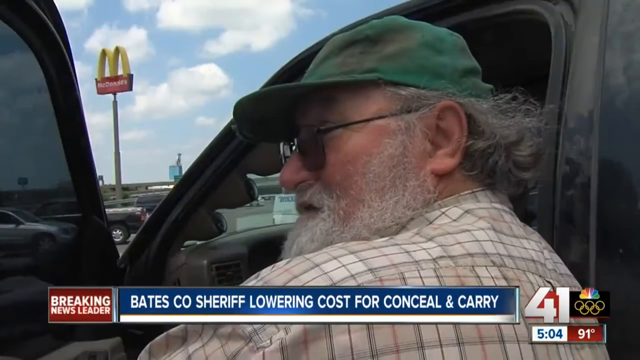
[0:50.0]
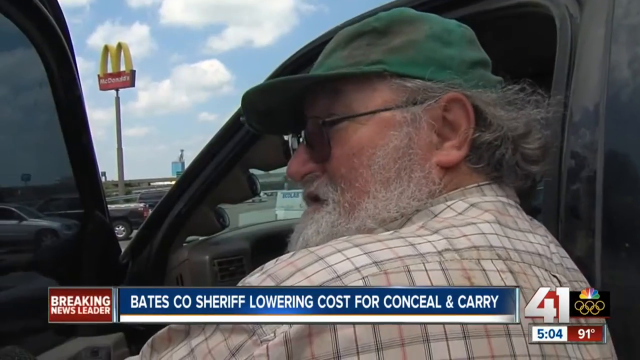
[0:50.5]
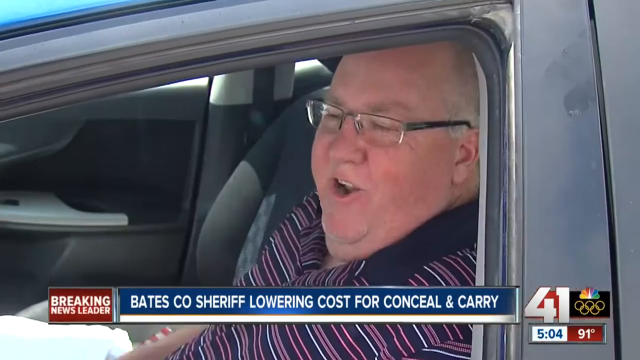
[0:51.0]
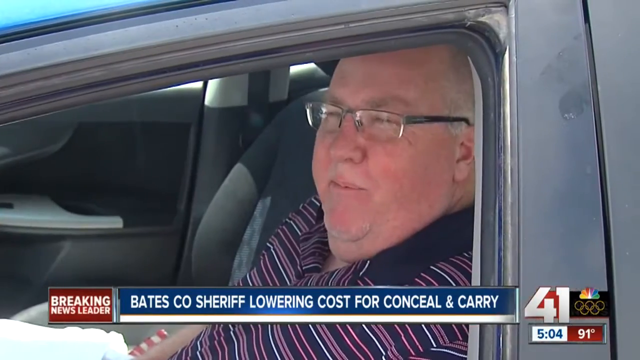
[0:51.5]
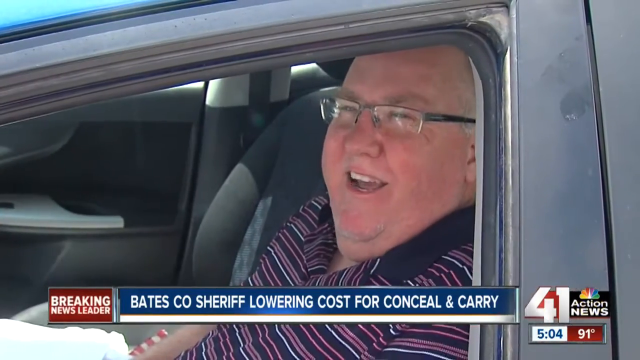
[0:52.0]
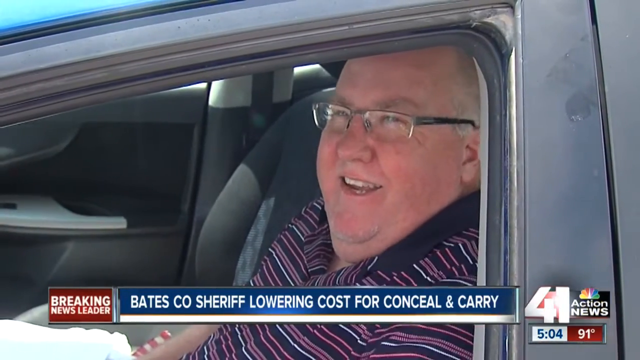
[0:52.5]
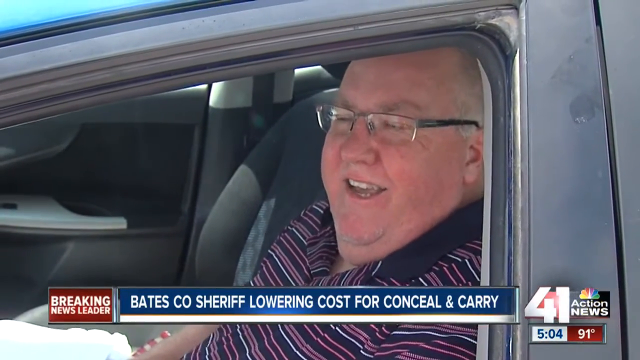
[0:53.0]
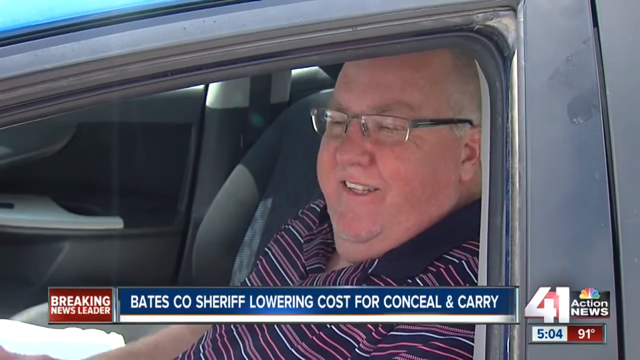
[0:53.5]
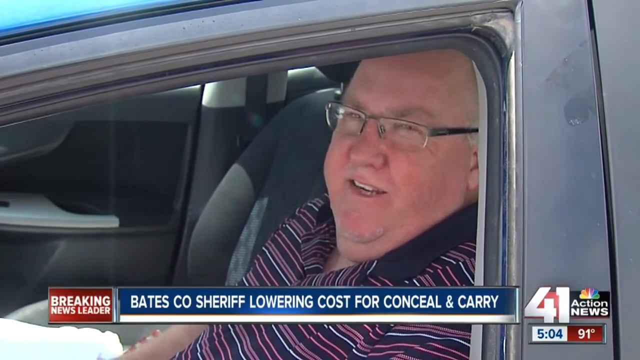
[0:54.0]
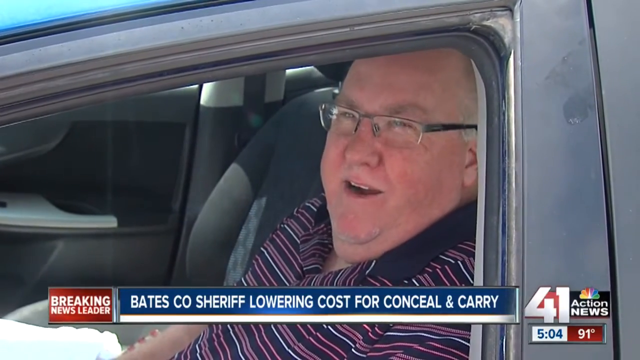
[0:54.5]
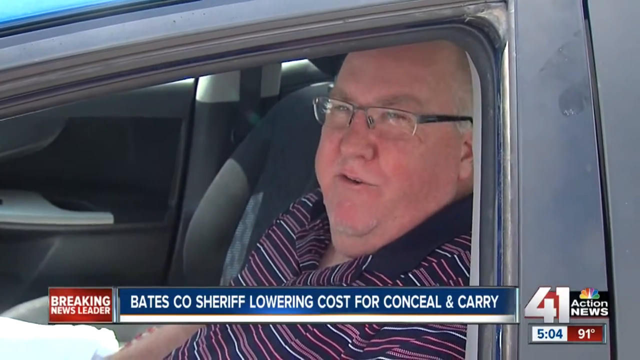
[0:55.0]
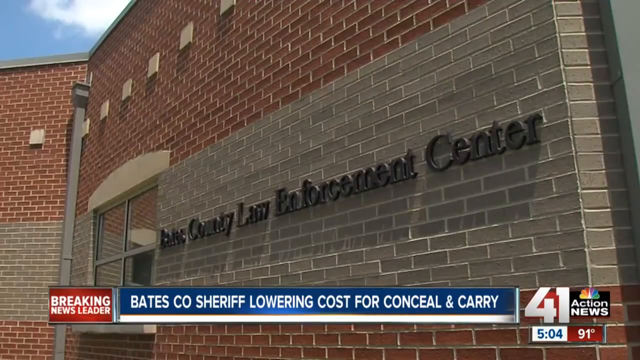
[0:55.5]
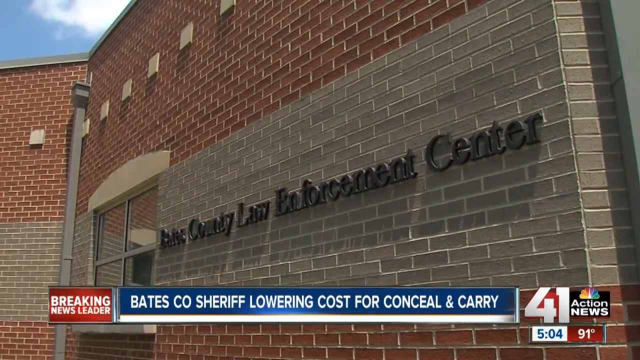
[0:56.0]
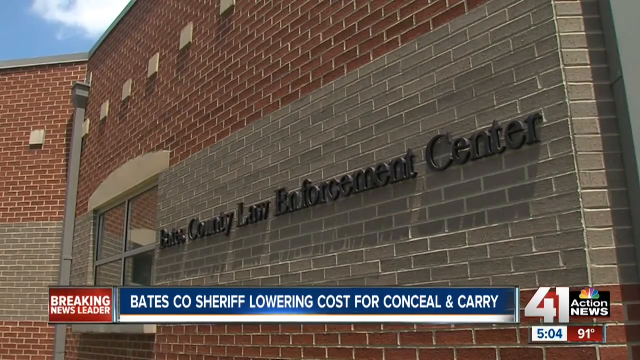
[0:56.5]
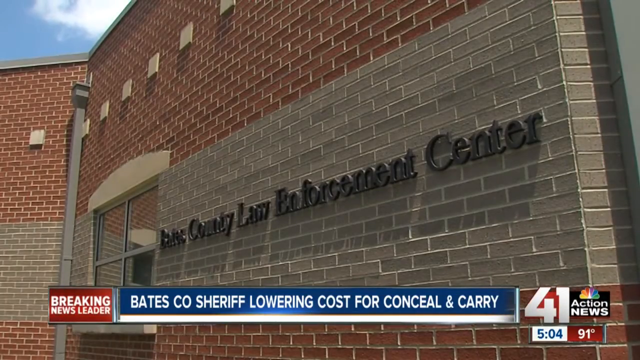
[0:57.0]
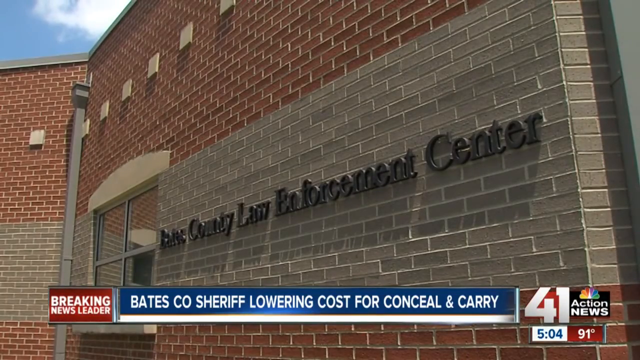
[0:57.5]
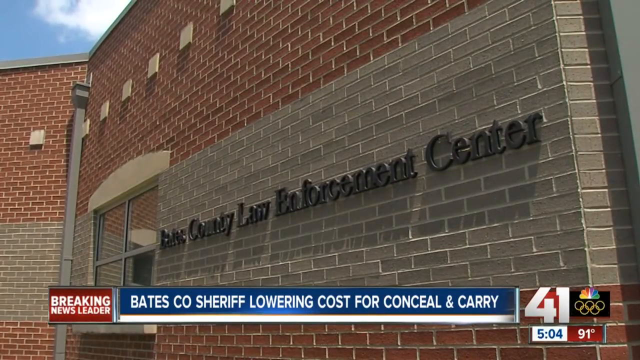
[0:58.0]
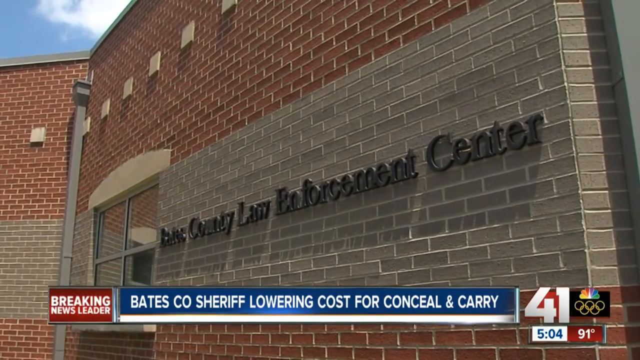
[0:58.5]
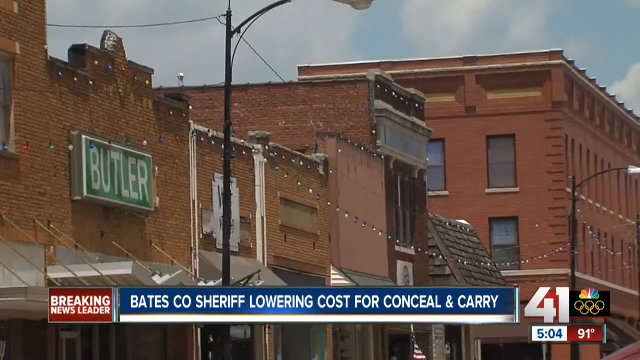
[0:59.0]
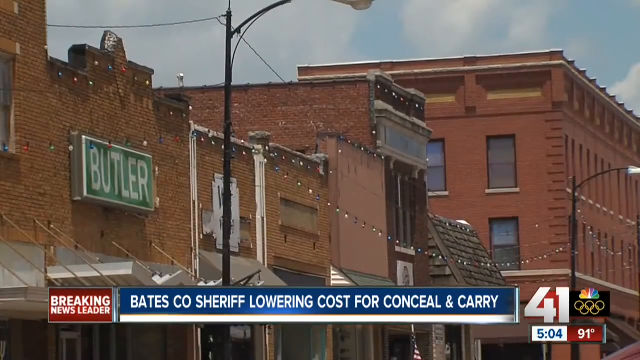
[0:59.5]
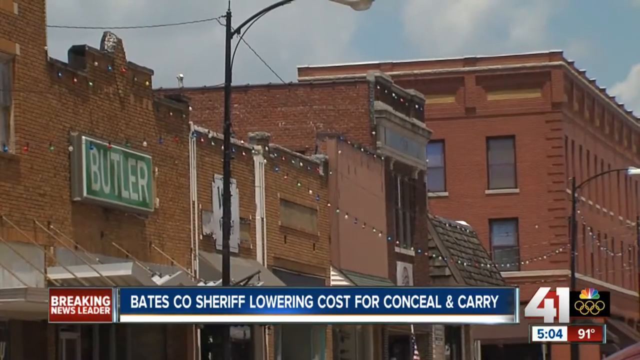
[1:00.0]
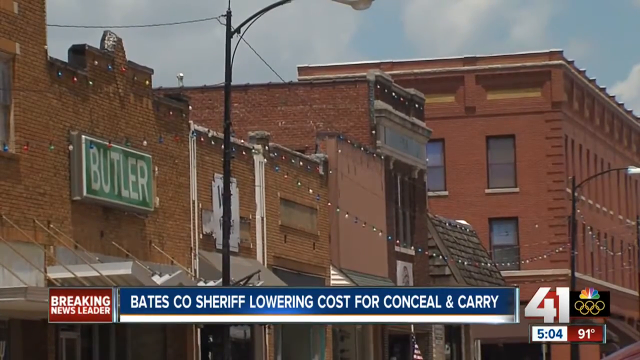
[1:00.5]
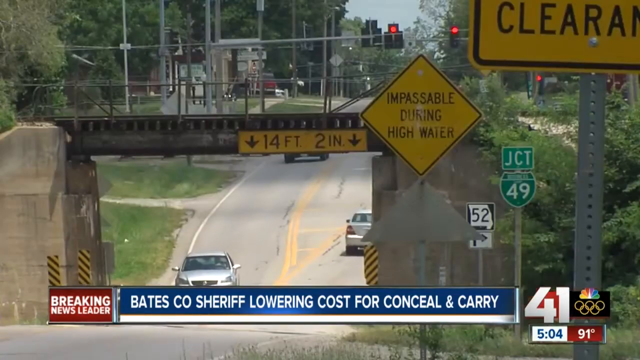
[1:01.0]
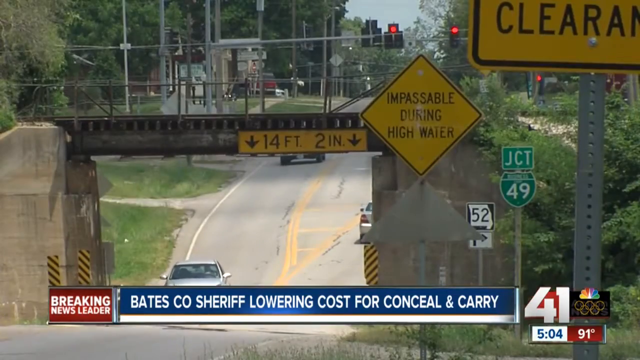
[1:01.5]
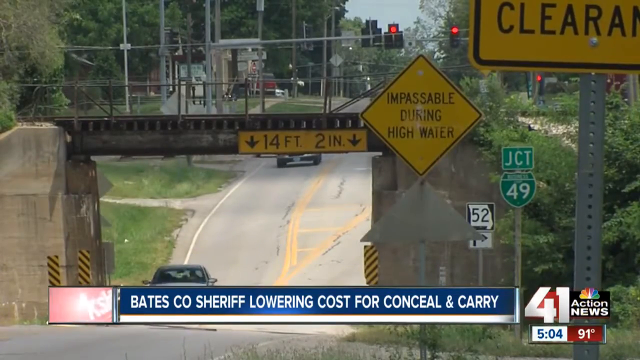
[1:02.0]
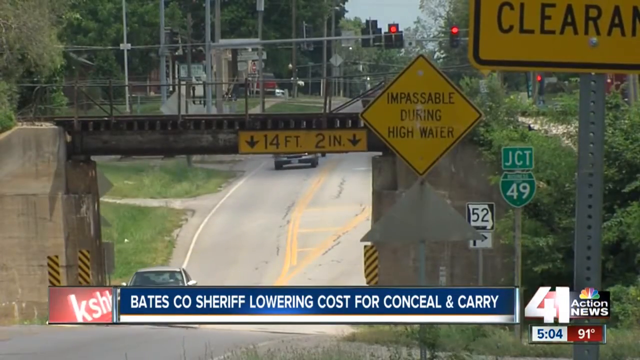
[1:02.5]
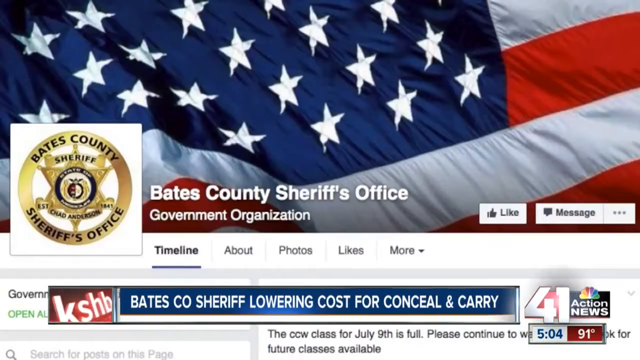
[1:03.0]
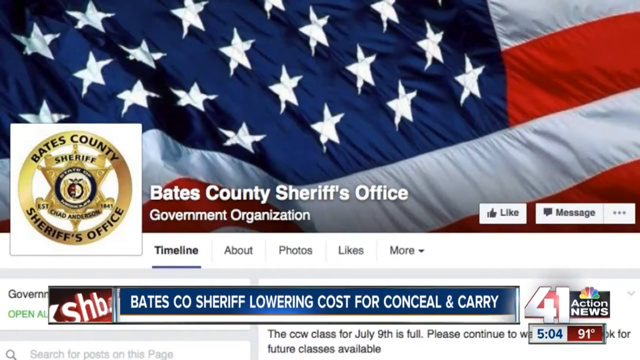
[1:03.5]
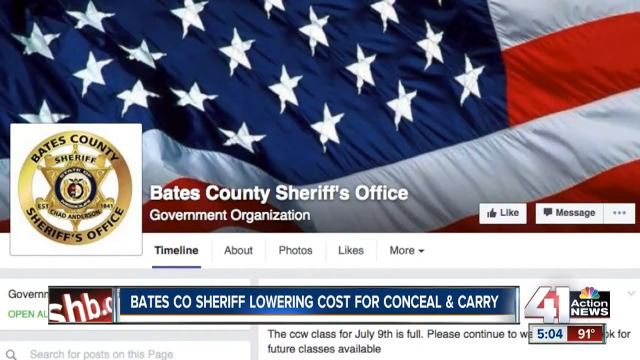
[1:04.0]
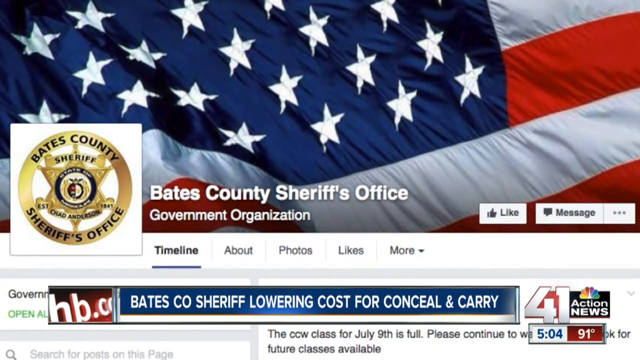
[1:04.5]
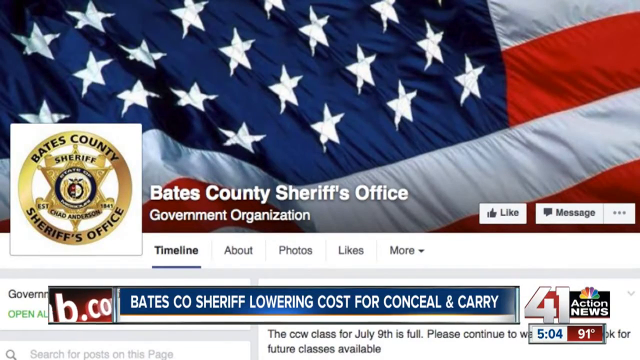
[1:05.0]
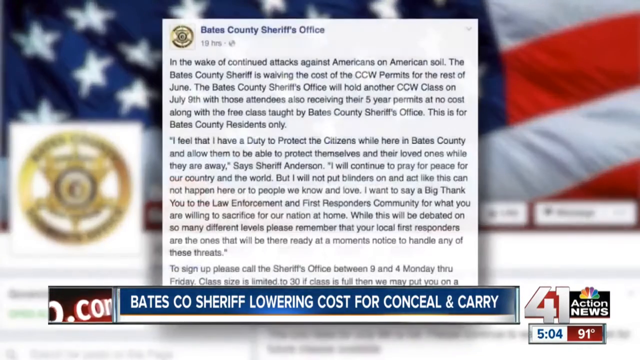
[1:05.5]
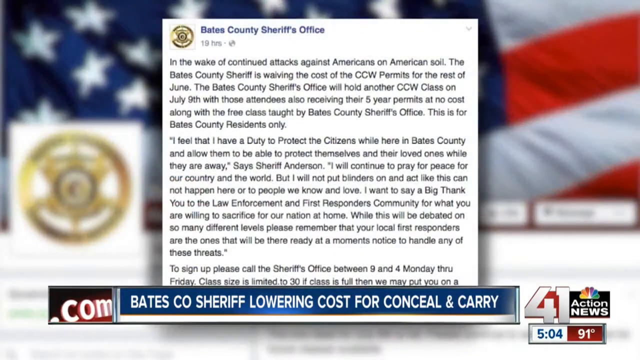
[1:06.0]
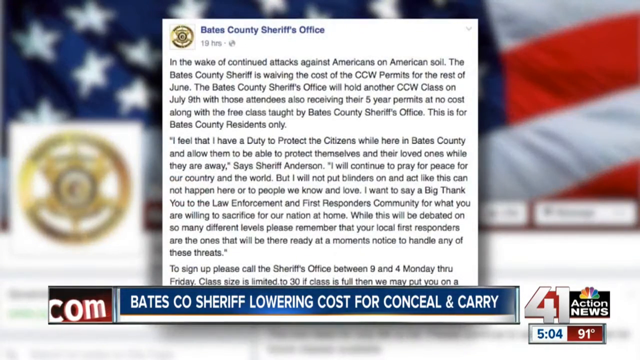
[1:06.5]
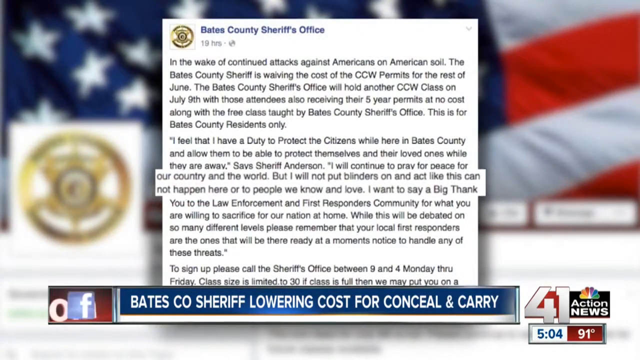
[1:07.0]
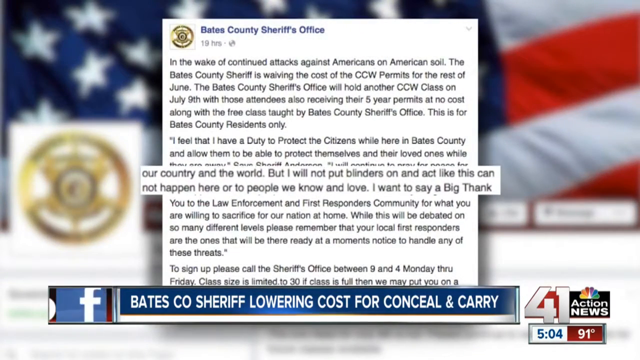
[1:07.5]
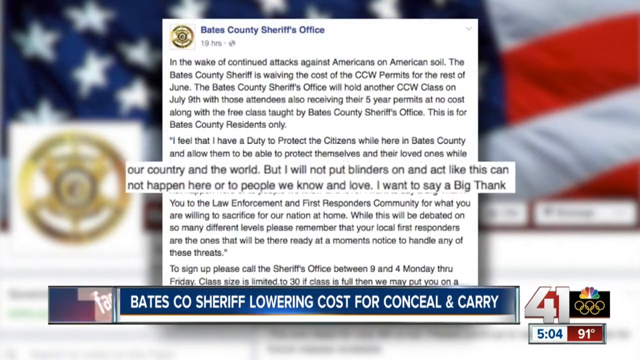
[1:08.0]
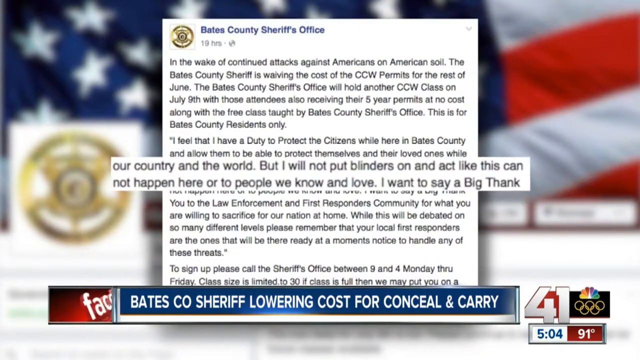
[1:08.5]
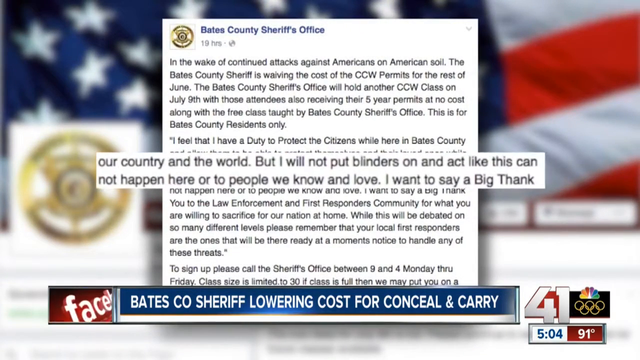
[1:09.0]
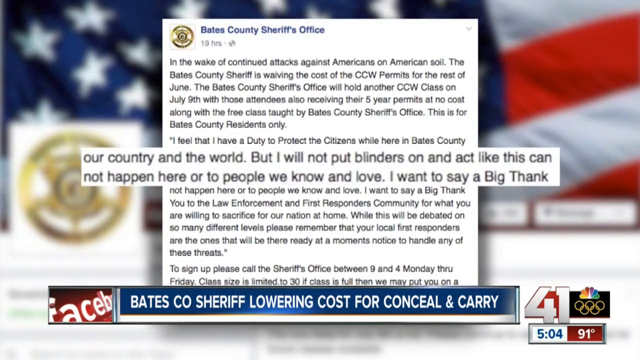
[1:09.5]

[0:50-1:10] In this news program, the bottom of the screen reads "Bates Co. Sheriff lowering cost for conceal and carry." In an exterior shot with a McDonald's arch in the back, a man with a long gray beard is right next to the open driver's door of his truck. The video goes to another man in his car on the driver's side; he wears glasses and a striped shirt, and he speaks, kind of smiles and moves his head. Next is an exterior shot of a county law enforcement center, with that name on the exterior, followed by an exterior of what appears to be a downtown. A store name reads "Butler," in green with white text. Cars drive under a little train overpass. The video then shows the Bates County Sheriff's Office on what looks like a webpage, with an American flag at the top. A statement from the county sheriff's office appears, and the view begins to zoom in on the text.